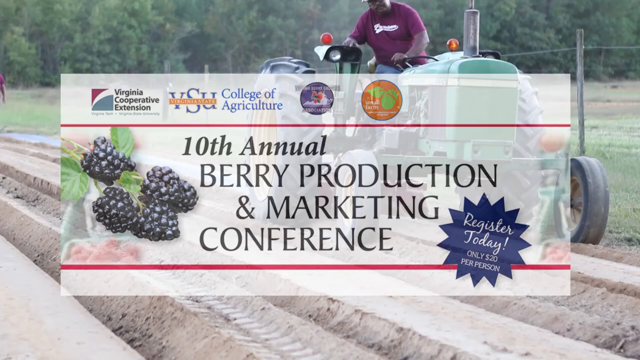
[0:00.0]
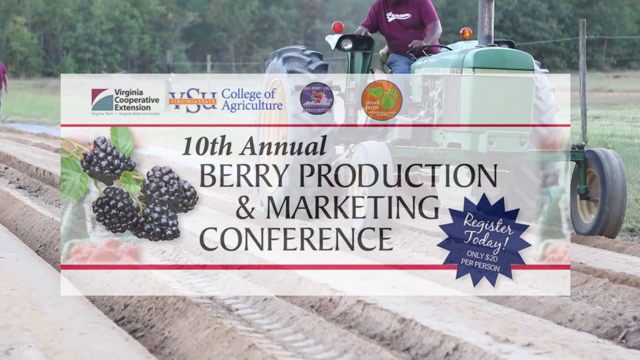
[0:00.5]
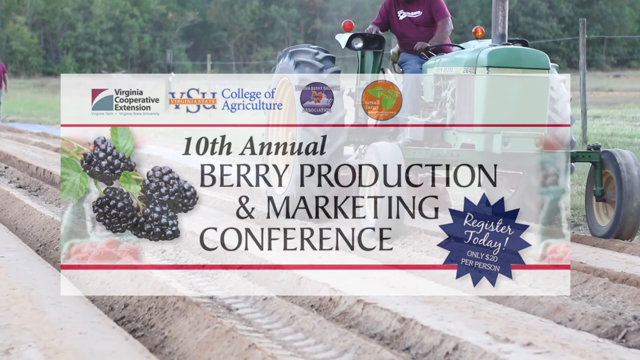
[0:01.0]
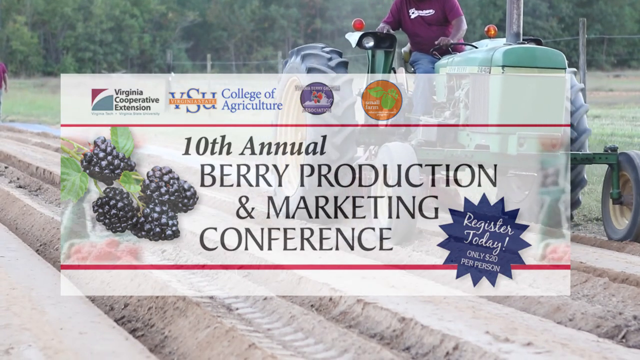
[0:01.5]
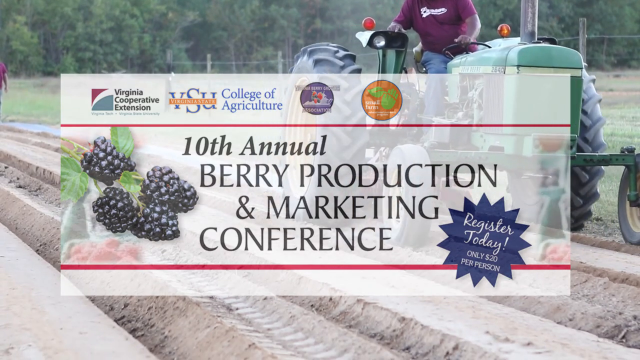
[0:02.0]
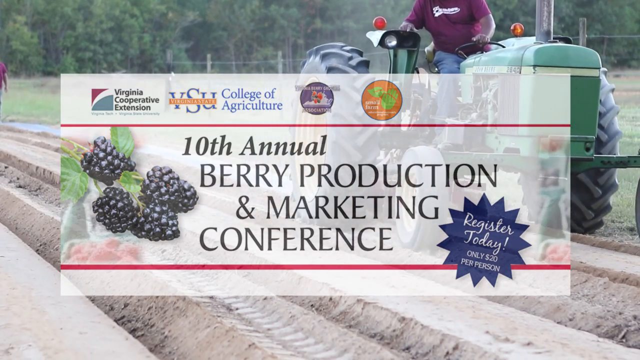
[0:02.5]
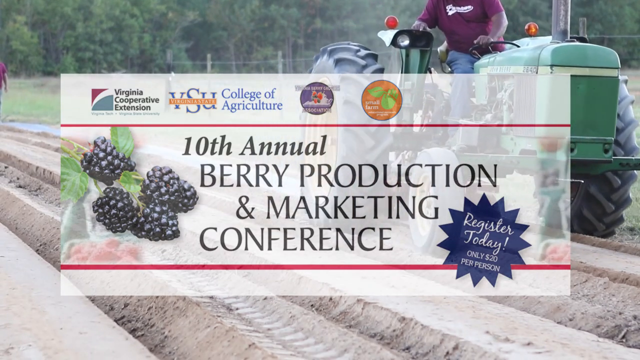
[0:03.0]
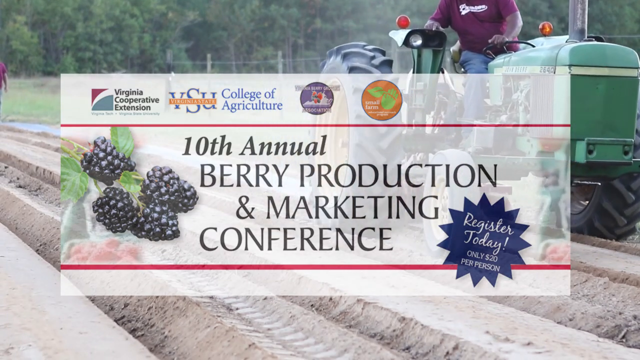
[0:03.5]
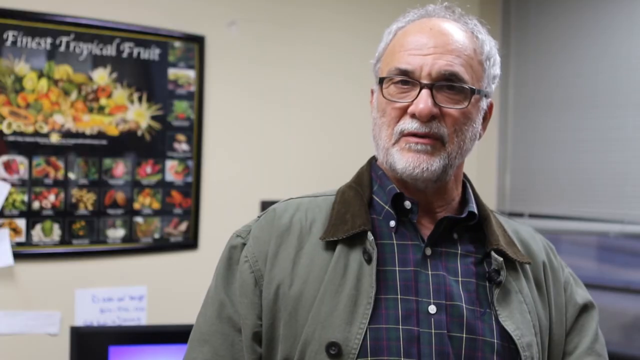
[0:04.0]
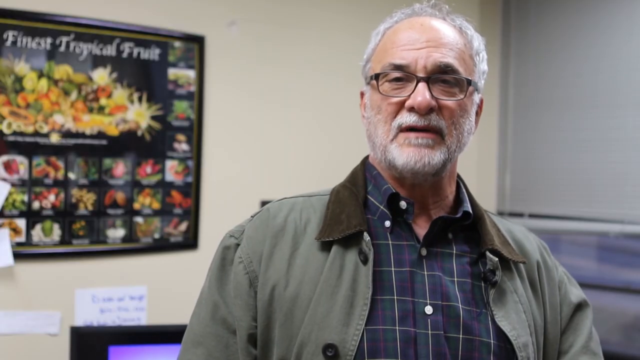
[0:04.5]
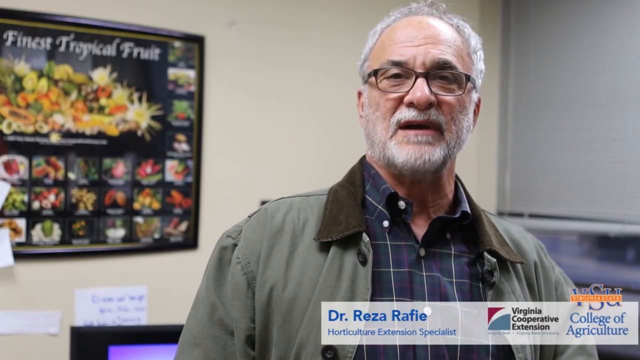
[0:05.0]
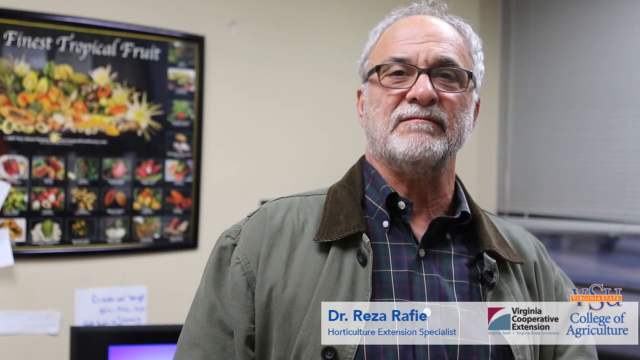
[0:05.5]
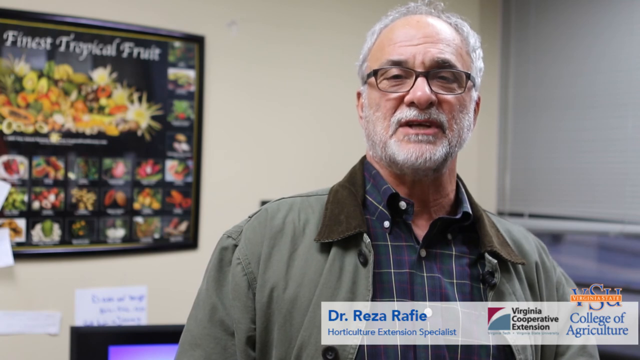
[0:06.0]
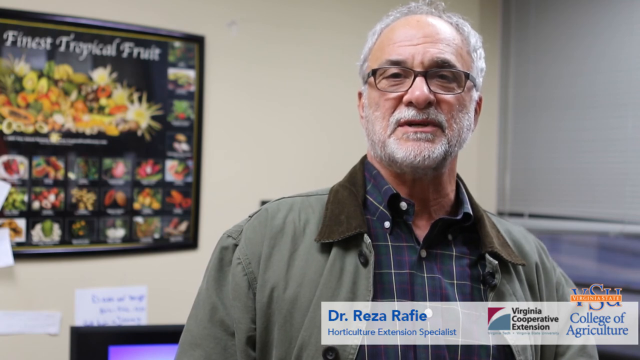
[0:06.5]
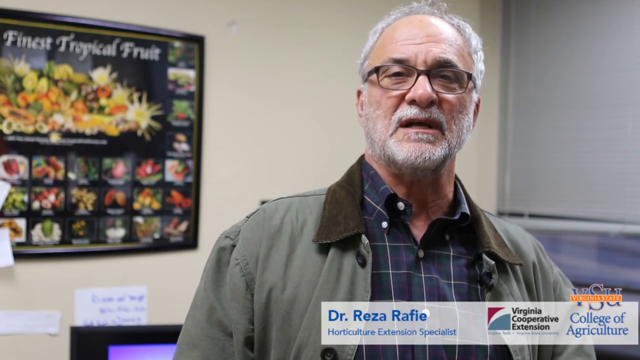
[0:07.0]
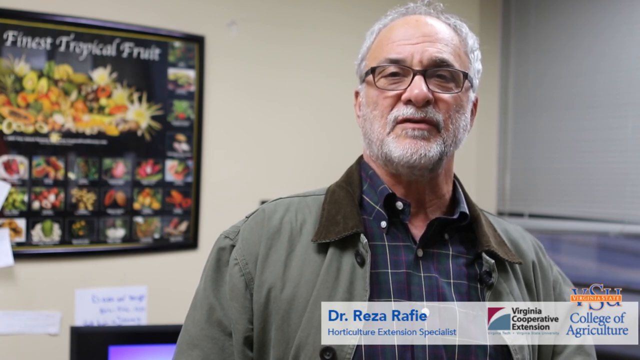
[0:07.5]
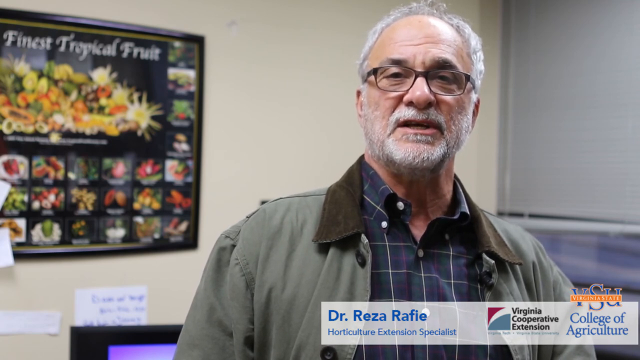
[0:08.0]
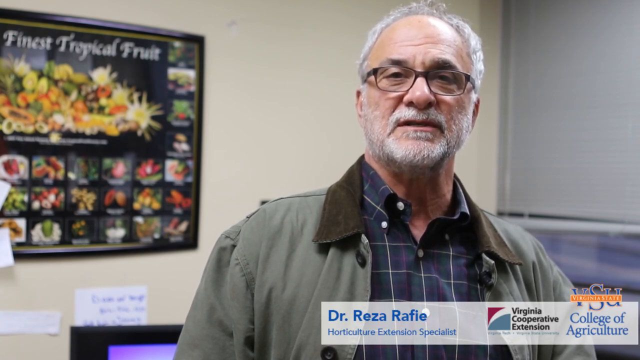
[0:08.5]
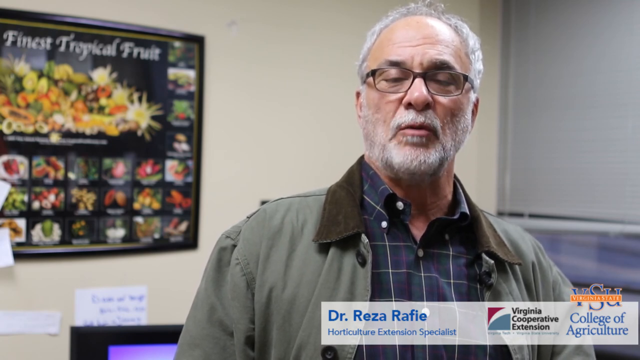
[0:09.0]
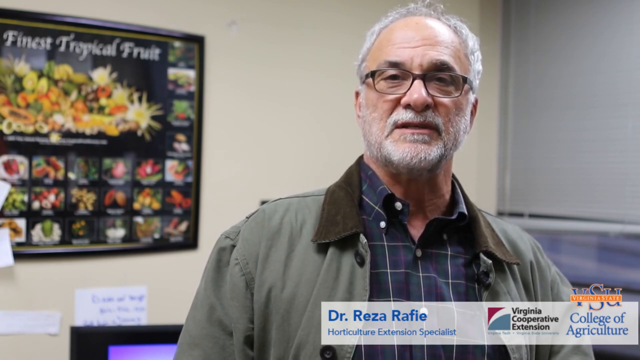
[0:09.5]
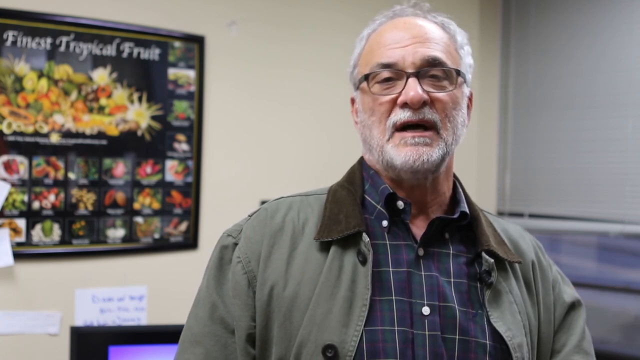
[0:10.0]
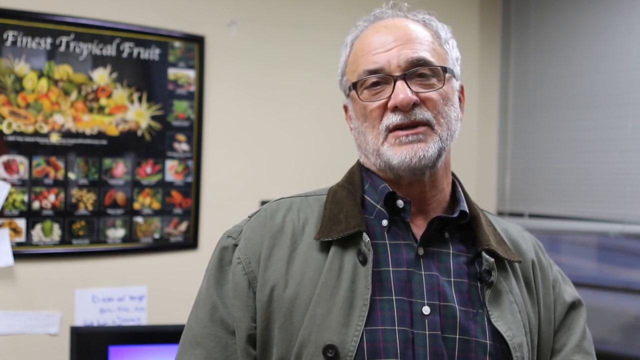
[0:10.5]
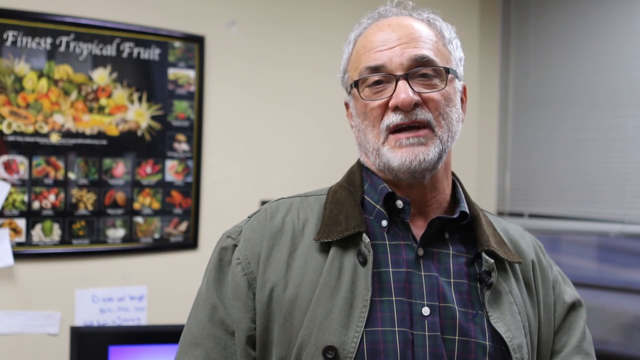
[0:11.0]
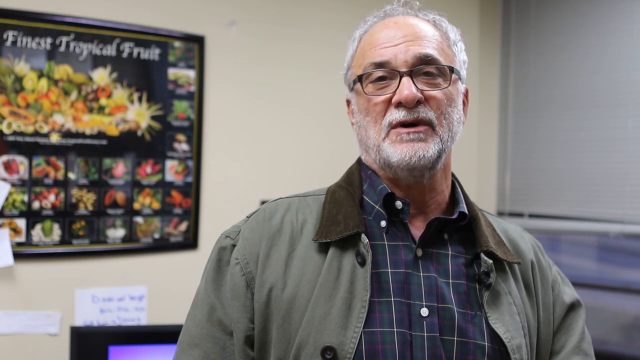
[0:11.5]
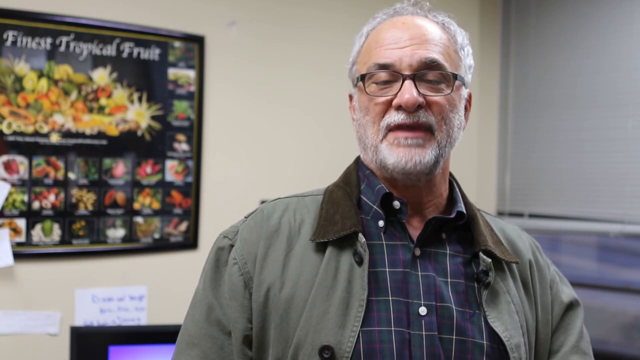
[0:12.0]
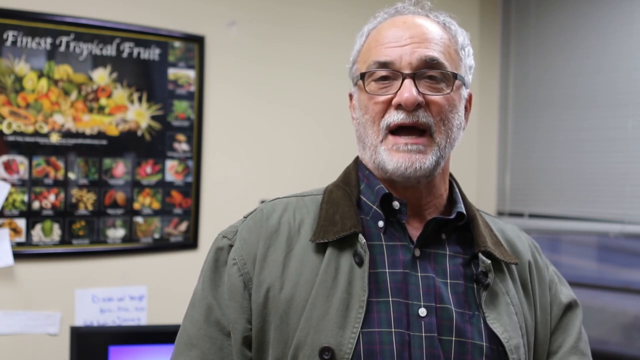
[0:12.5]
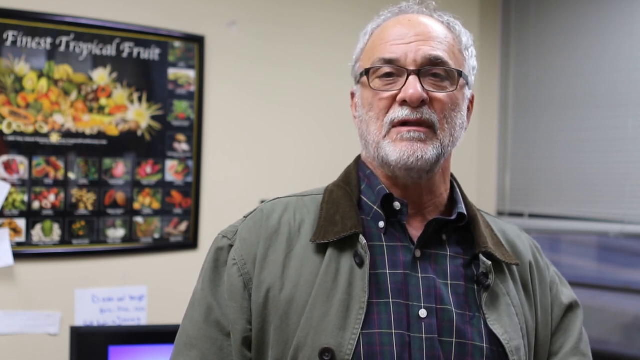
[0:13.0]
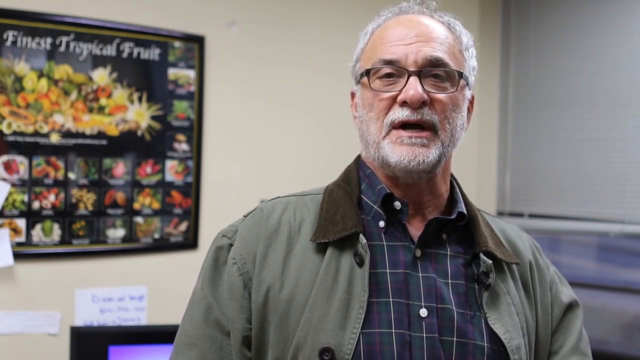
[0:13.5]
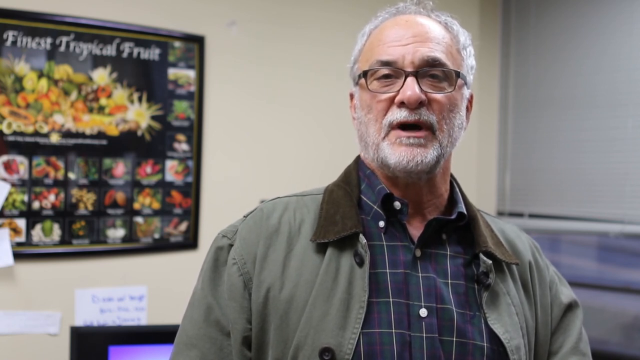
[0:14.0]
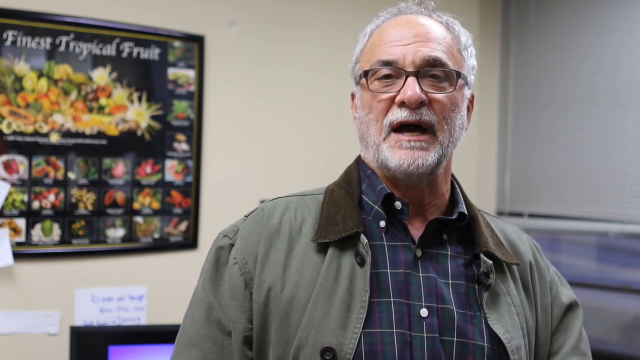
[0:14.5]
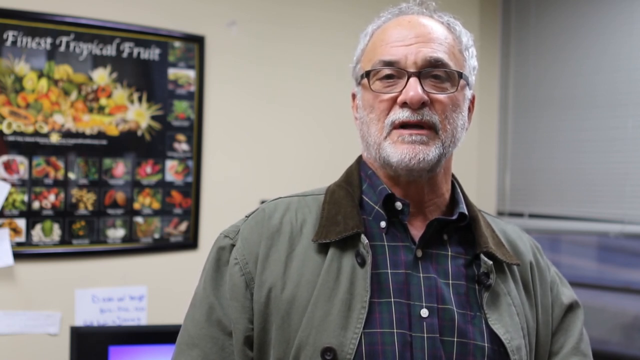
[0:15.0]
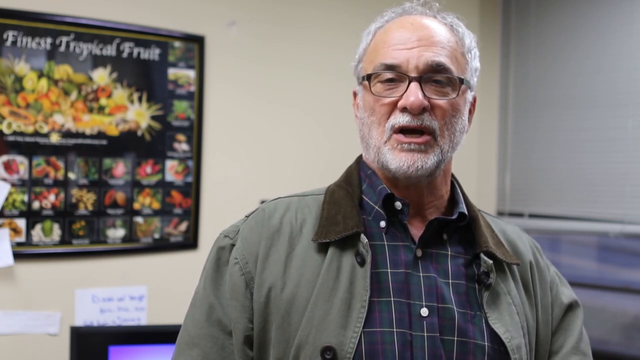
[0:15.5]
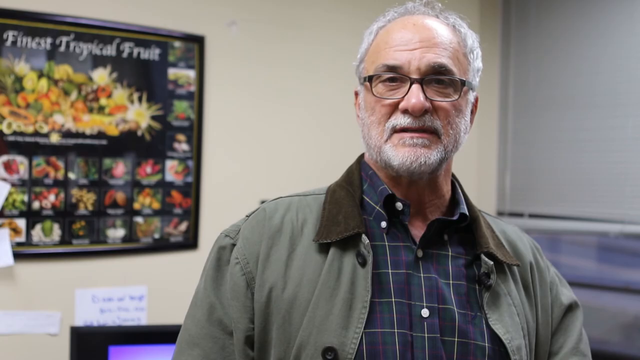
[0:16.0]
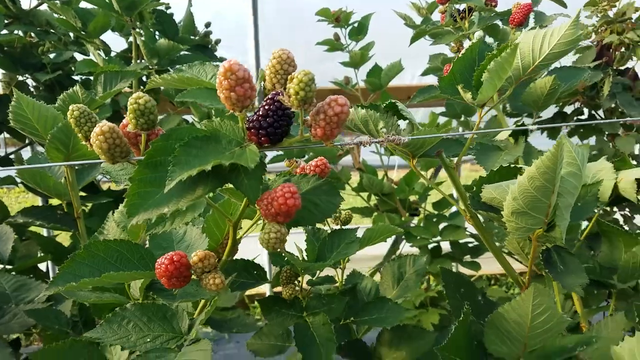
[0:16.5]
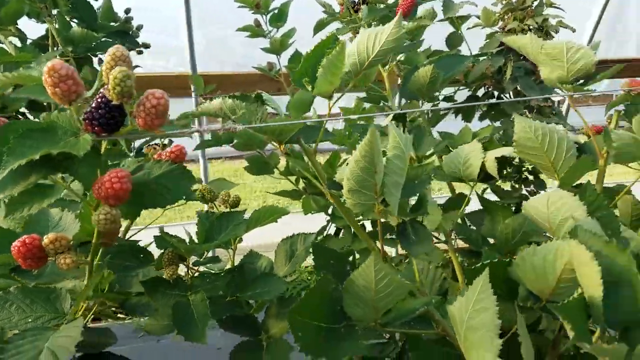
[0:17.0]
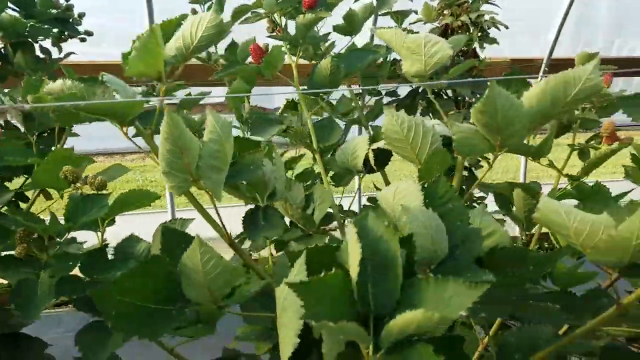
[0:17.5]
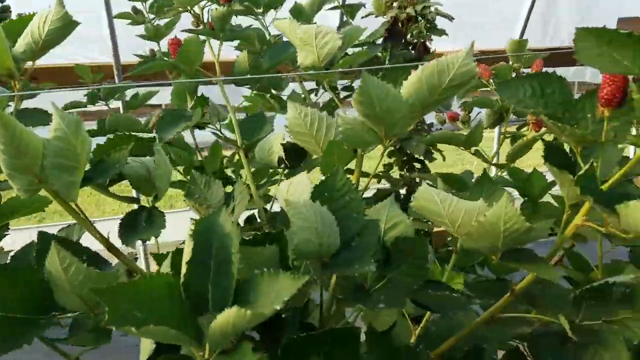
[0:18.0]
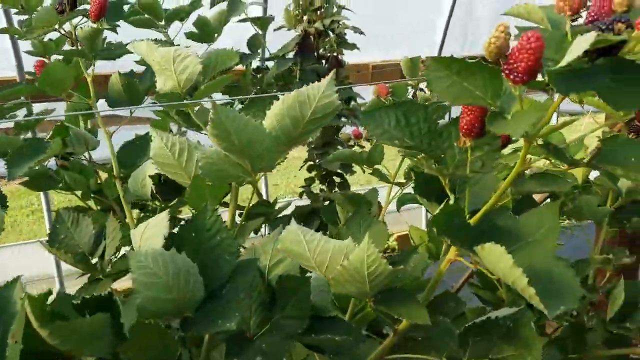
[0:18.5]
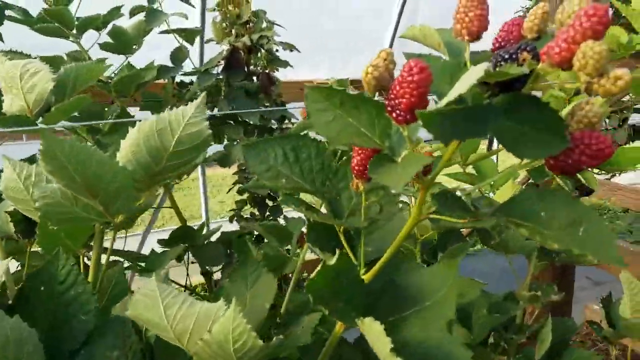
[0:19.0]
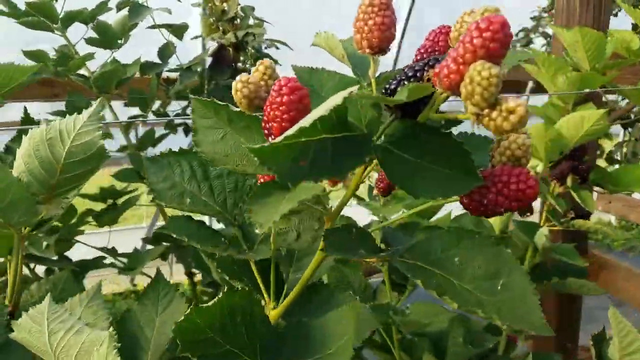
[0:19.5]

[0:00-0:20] The video concerns the 10th Annual Berry Production and Marketing Conference, for the Virginia State University College of Agriculture and Virginia Cooperative Extension. A text card shows four blackberries next to the text, and a blue star appears next to and below the text, which reads "Register today, only $20 per person." In the background, a farmer on a green tractor is working his land. The tractor has a red light and an orange light on it, and its exhaust pipe is visible. The farmer wears a purple shirt with white writing. A person is off in the distance on the left side of the screen, and beyond that are lots of trees or crops. The tractor is in motion, doing its work. The video then moves to an interview with Dr. Reza Rafi, a horticultural extension specialist with the Virginia Cooperative Extension at the Virginia State University College of Agriculture. He wears a light green barn jacket with a brown corduroy collar and a green and blue shirt with red and white stripes through it. Behind him is an information poster that says "finest tropical fruit," with lots of different fruit on the flyer. He speaks to the camera. Next comes footage of berries on a vine: raspberries, perhaps blackberries, different kinds of berries in various states of ripeness.